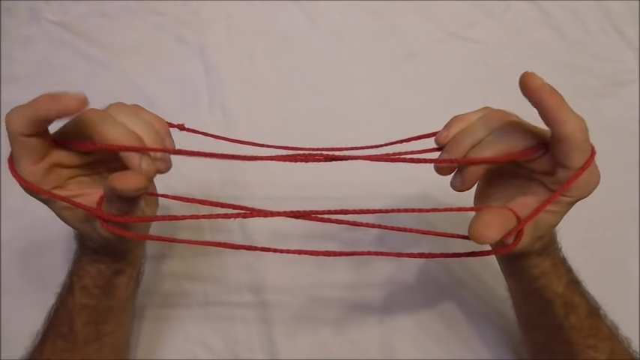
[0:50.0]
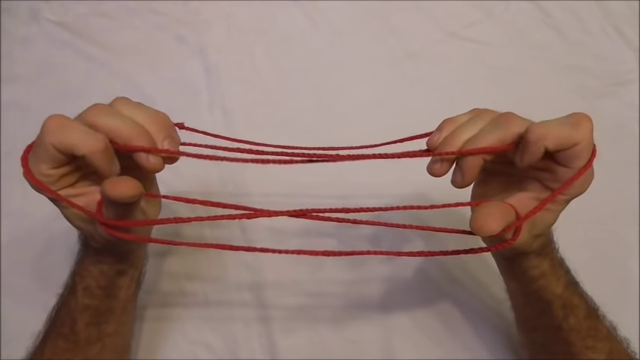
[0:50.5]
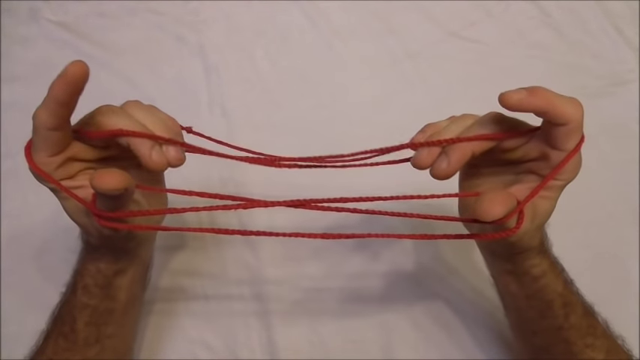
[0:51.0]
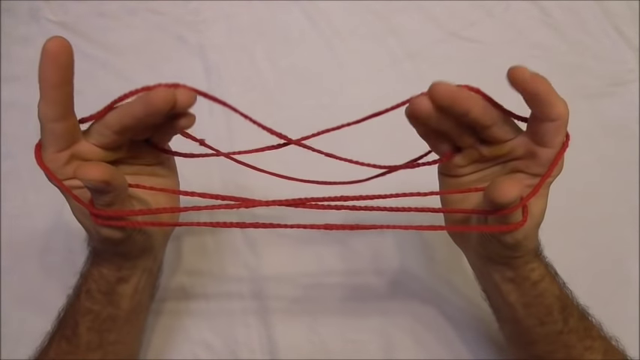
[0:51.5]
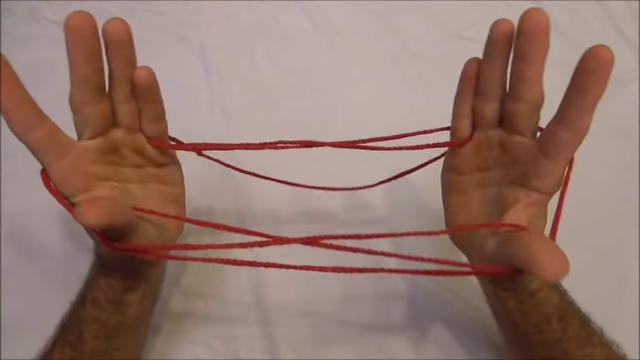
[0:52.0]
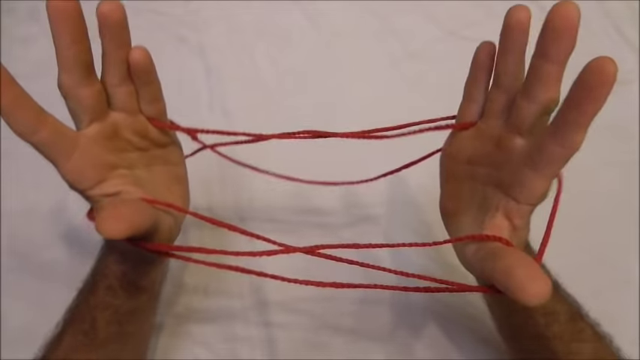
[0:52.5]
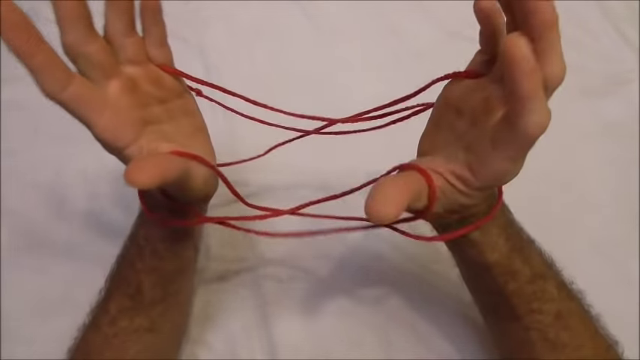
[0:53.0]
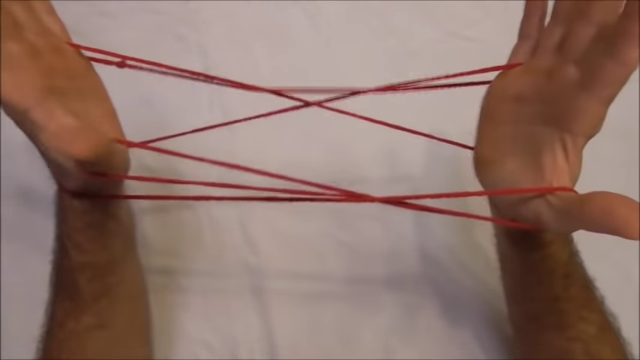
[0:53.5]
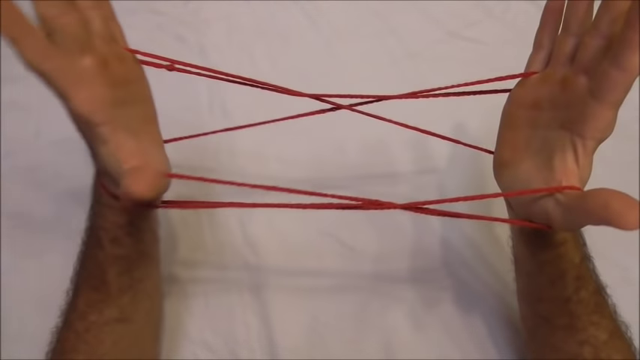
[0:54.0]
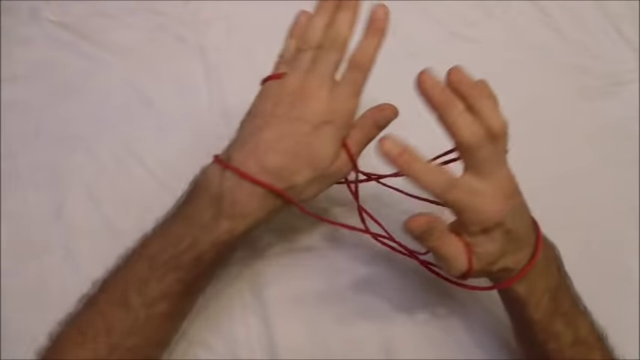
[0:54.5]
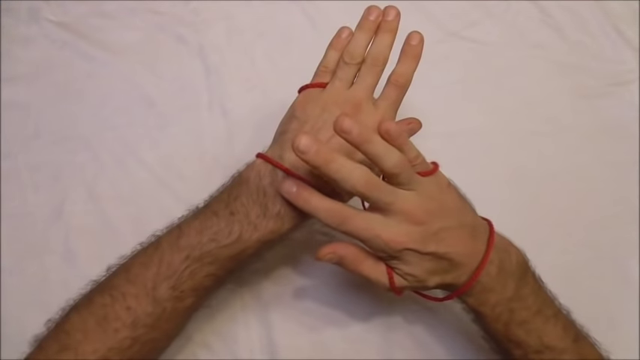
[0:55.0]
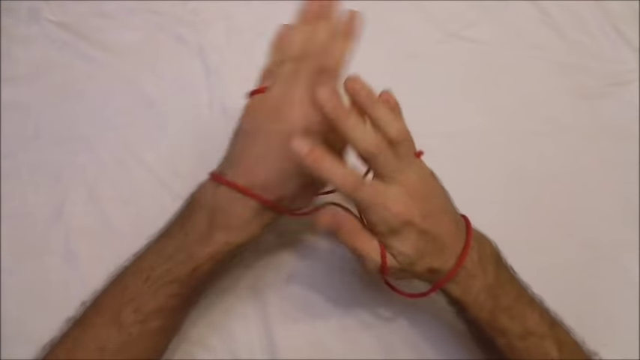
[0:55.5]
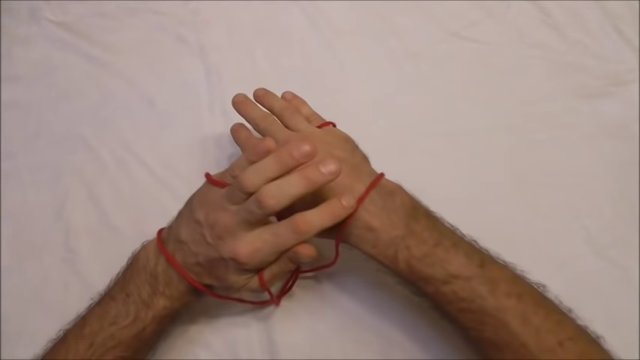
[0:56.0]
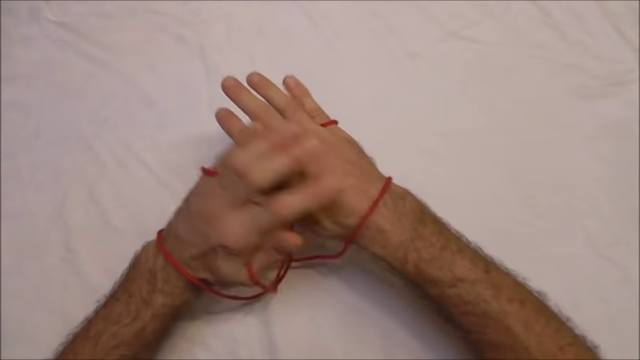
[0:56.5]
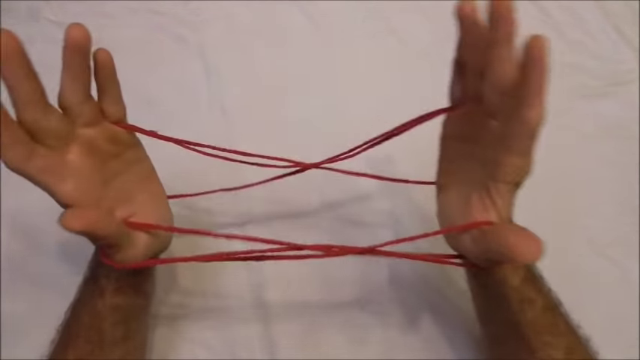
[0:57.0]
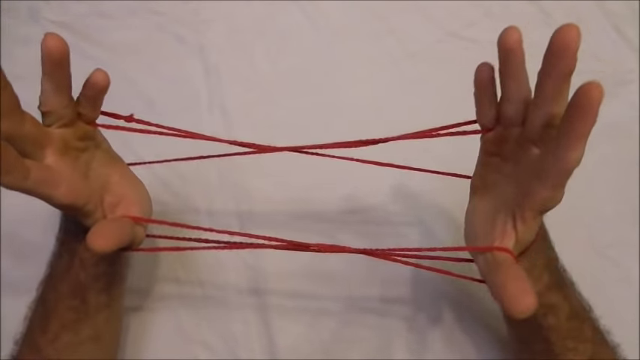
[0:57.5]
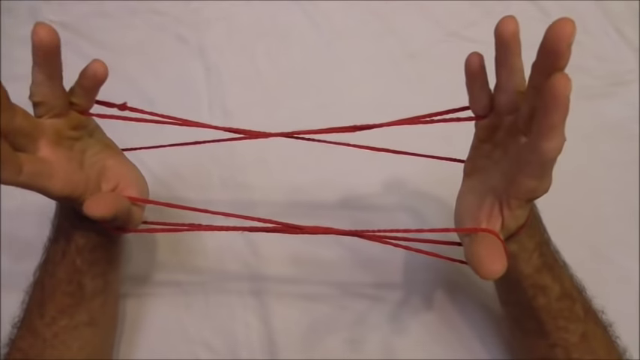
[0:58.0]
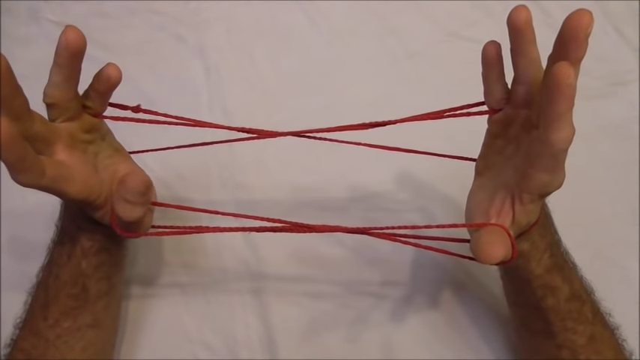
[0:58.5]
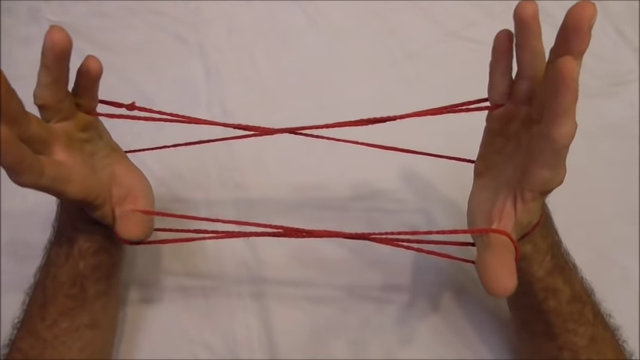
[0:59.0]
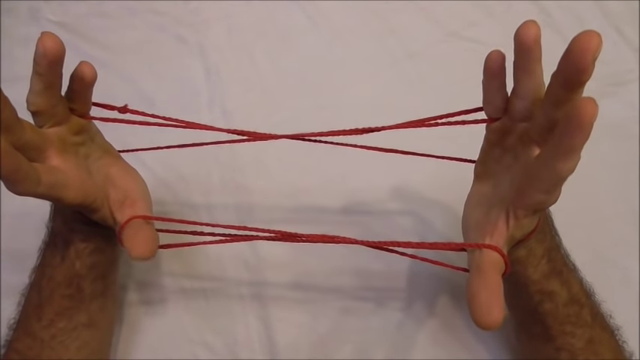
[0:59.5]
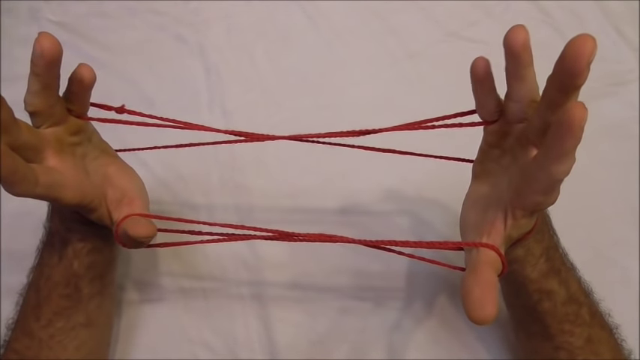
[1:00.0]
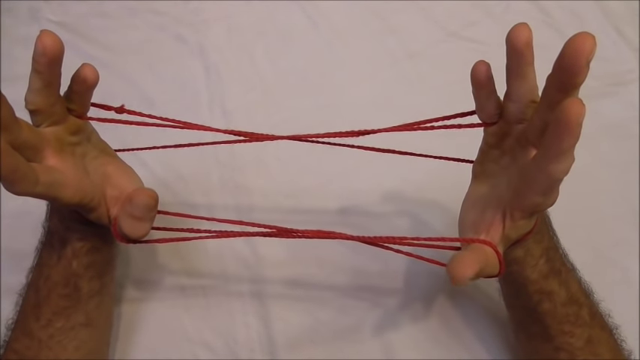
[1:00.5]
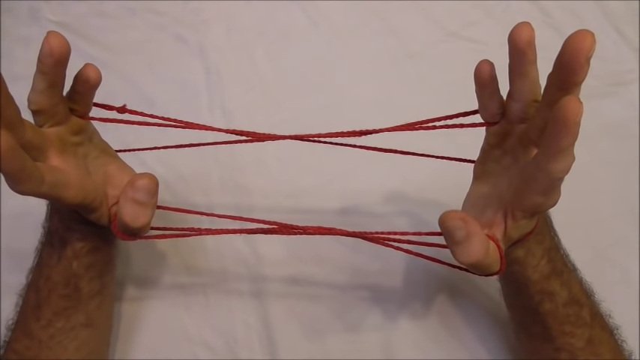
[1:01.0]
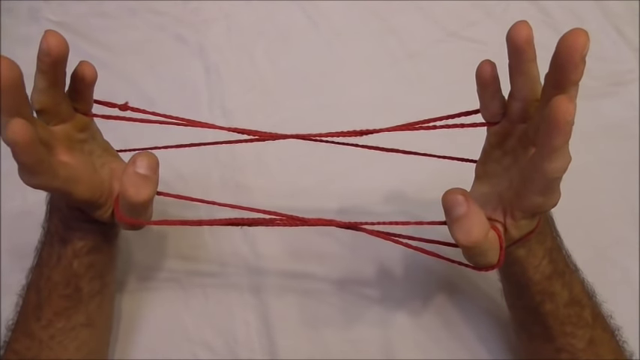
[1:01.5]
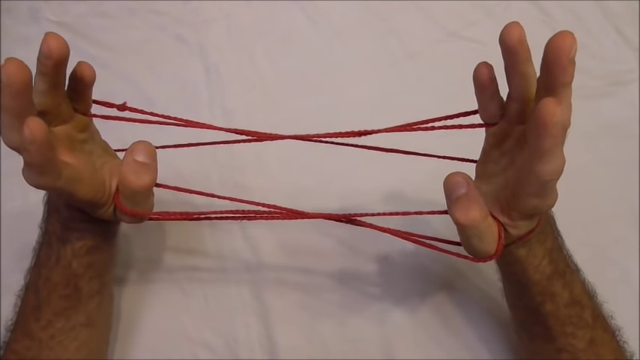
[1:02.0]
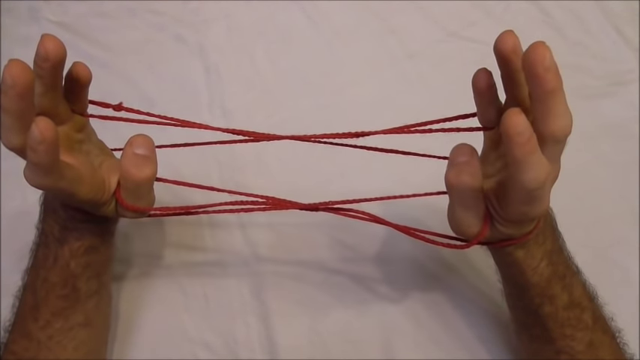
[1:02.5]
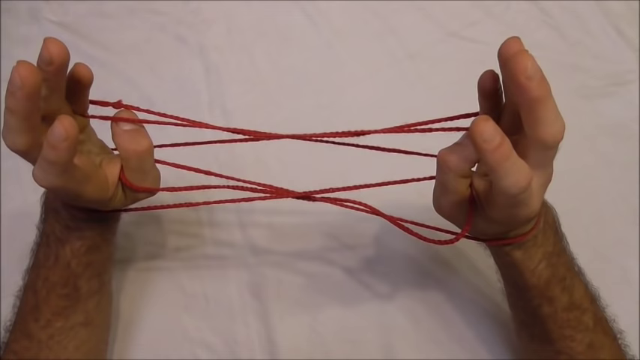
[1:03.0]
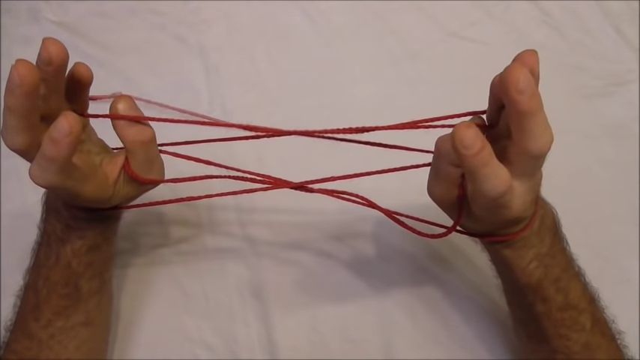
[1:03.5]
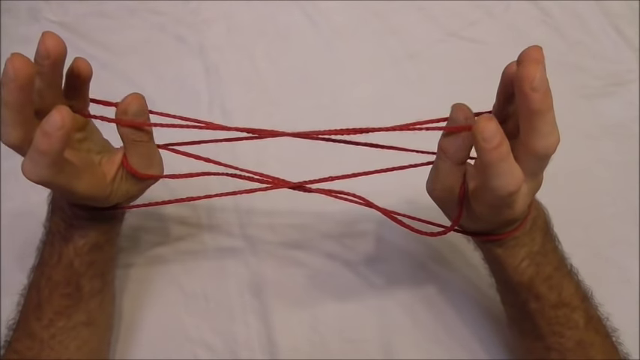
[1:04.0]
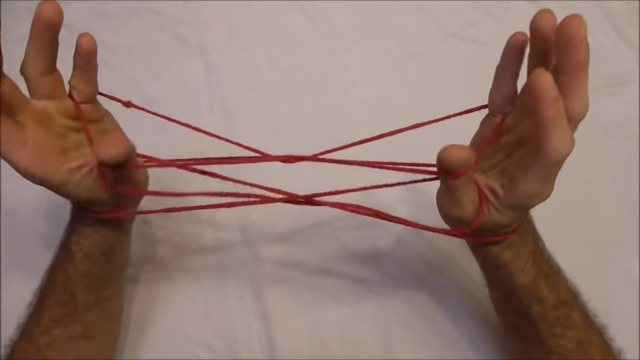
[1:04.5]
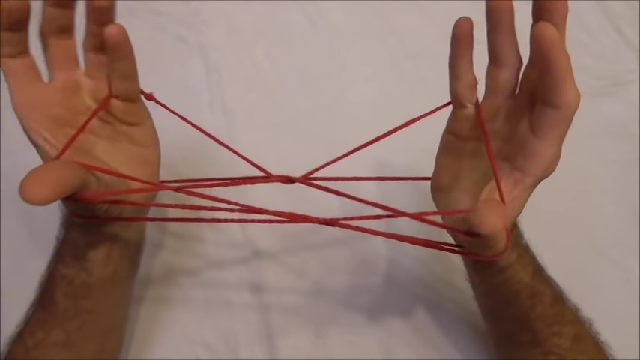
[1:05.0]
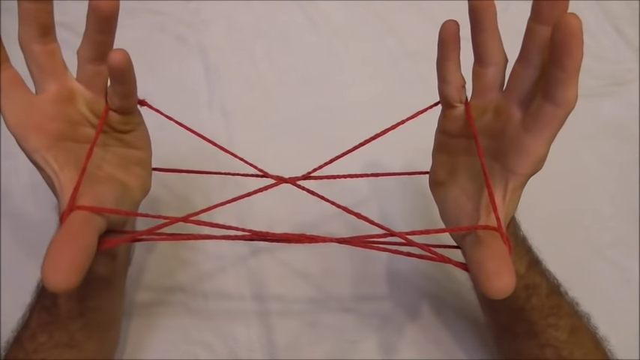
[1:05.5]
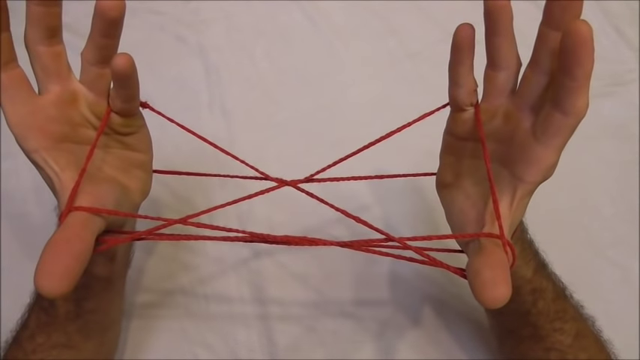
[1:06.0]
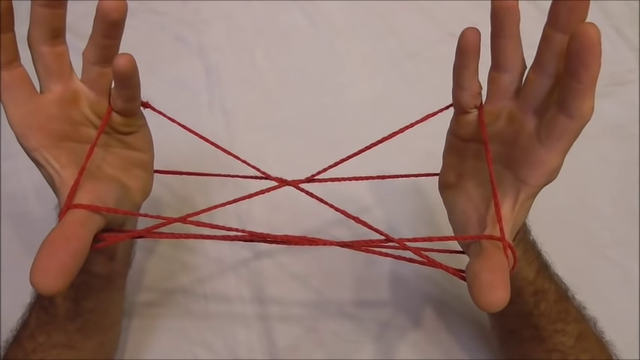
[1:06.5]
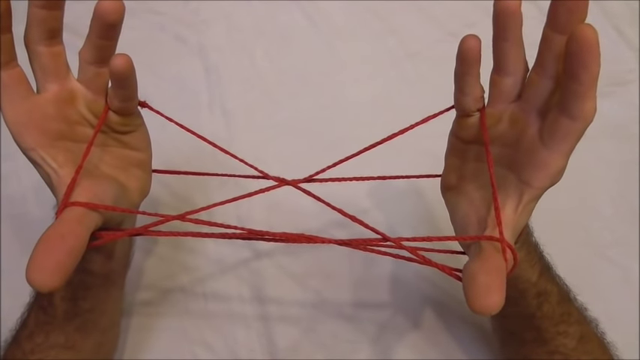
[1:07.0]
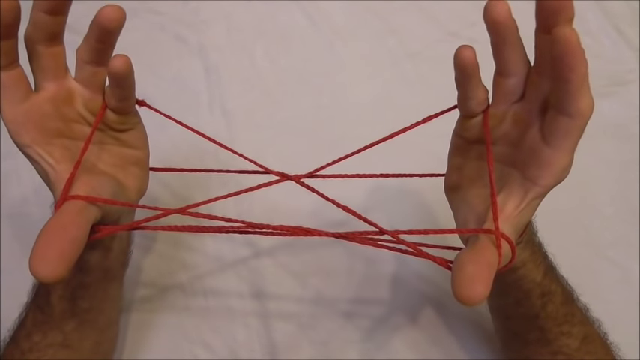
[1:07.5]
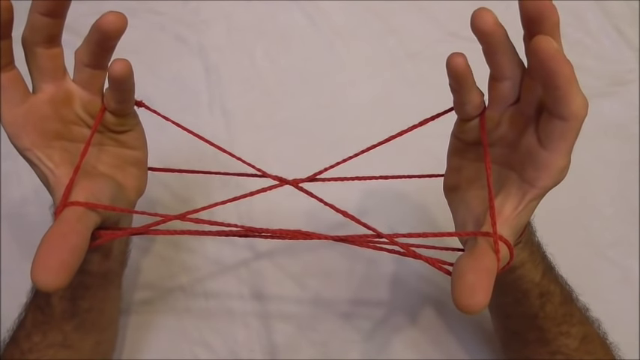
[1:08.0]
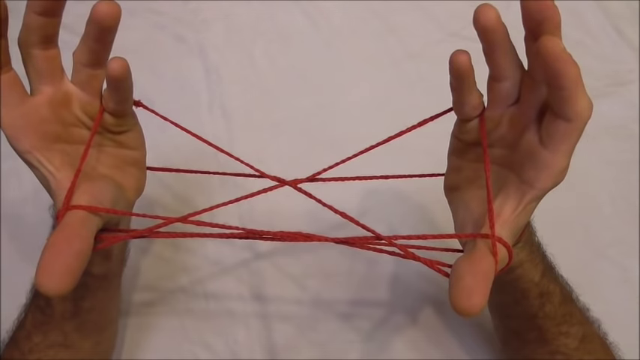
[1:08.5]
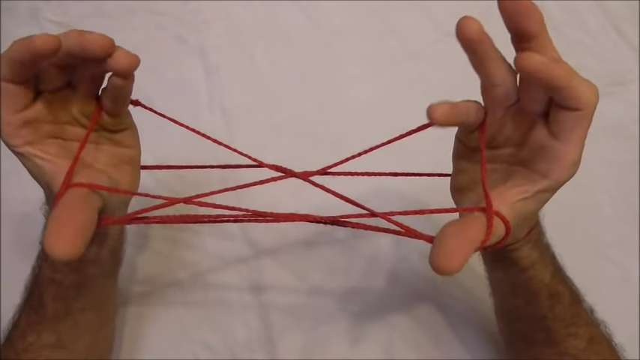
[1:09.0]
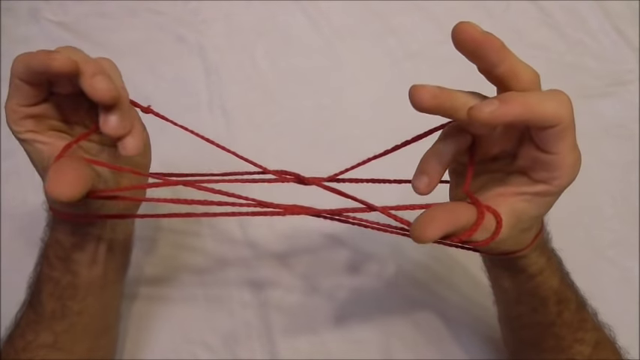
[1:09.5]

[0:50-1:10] Against the white background, his hands are inserted in the middle of the red yarn zigzag pattern. He opens both hands into a palm shape, stretching them out to the left and right, with his fingers both up and down. He uses his right hand to point at the top of his left hand where the red yarn is, then repeats this with his left hand toward his right hand, and stretches the red yarn out even more until it no longer has a zigzag pattern. He pushes both thumbs toward his palms while going to the middle of the yarn, then stretches his palms out again to form a new zigzag pattern, now more like an X. He then touches his thumbs with both index fingers.